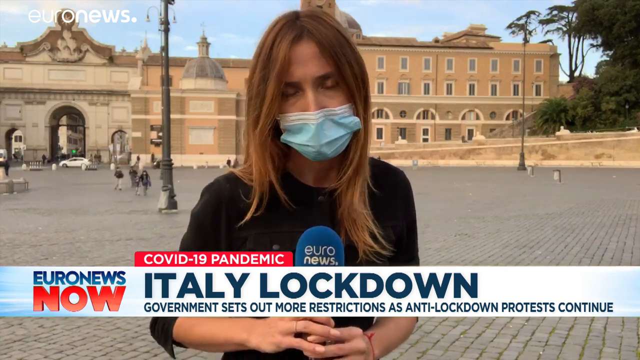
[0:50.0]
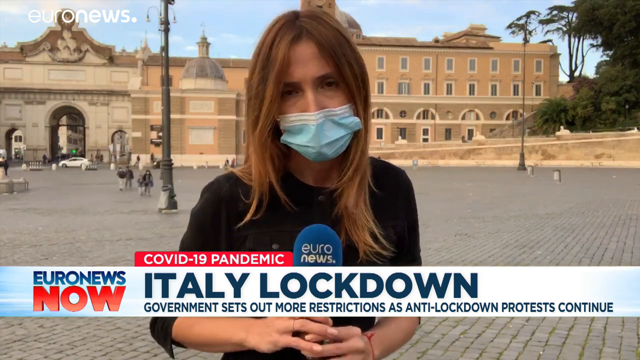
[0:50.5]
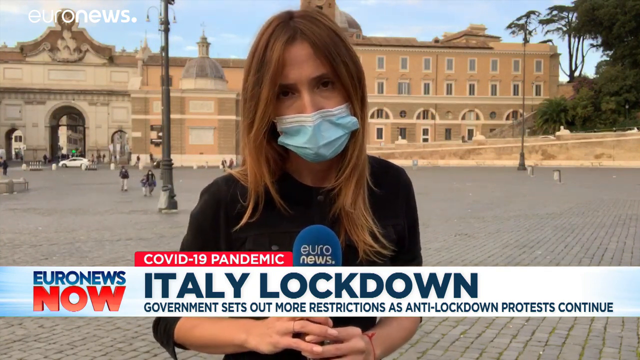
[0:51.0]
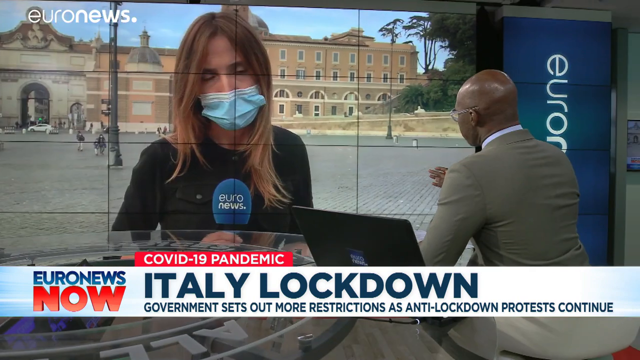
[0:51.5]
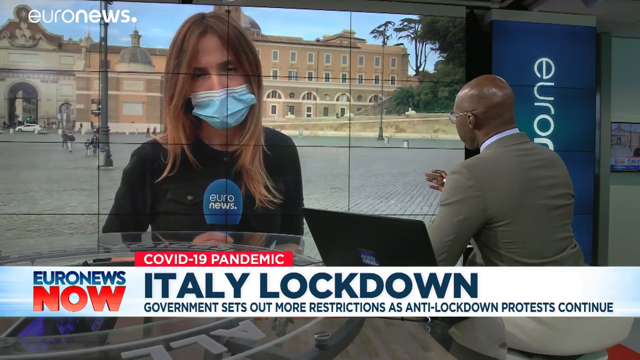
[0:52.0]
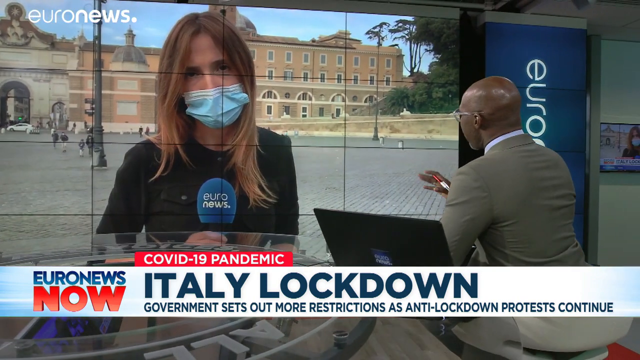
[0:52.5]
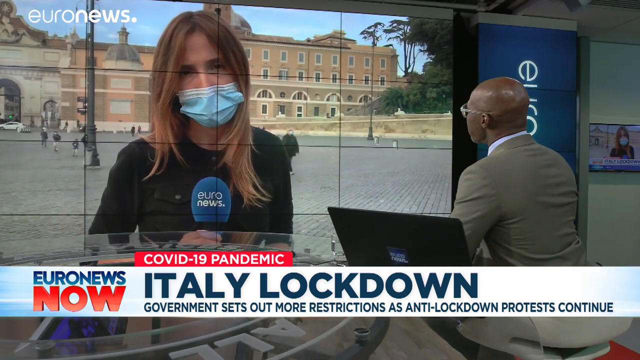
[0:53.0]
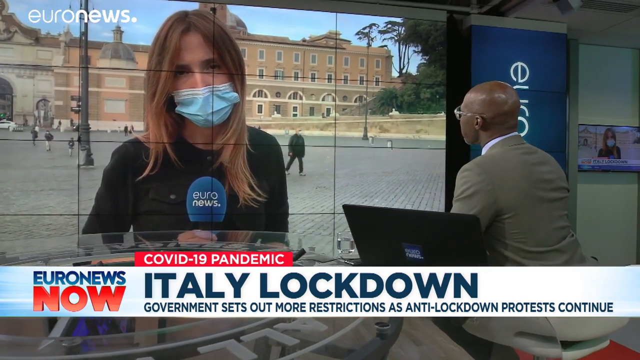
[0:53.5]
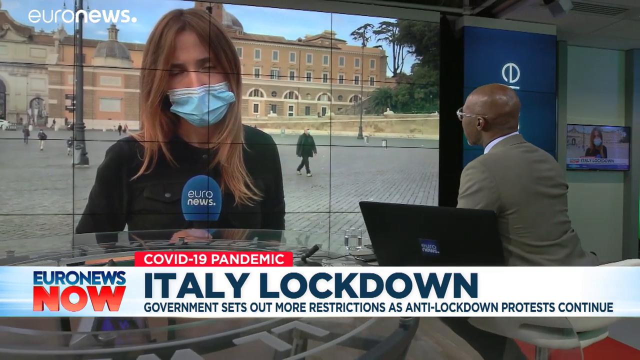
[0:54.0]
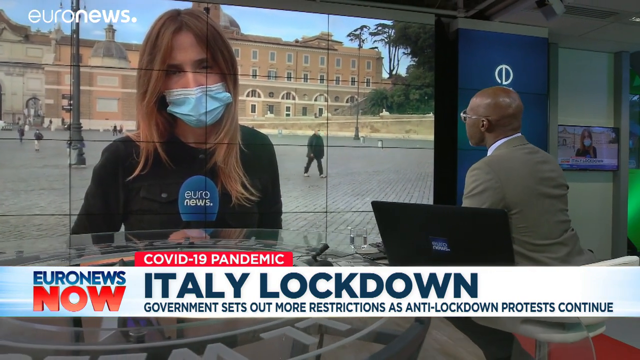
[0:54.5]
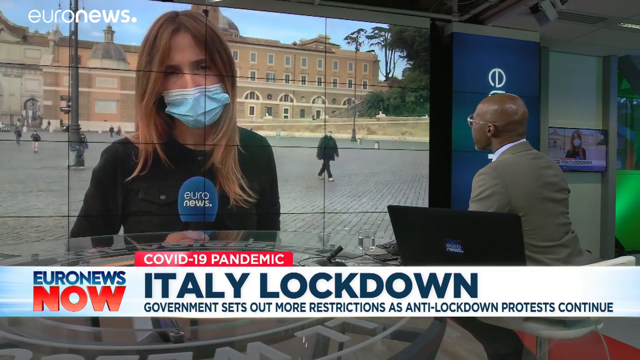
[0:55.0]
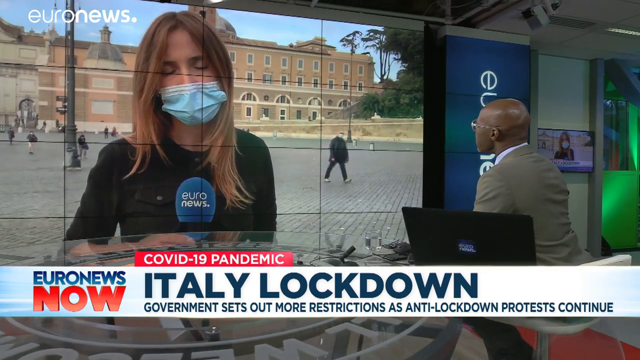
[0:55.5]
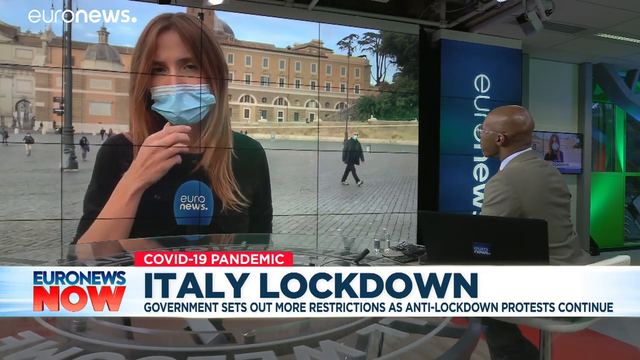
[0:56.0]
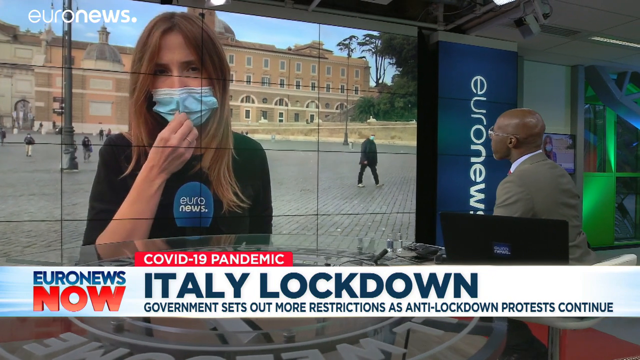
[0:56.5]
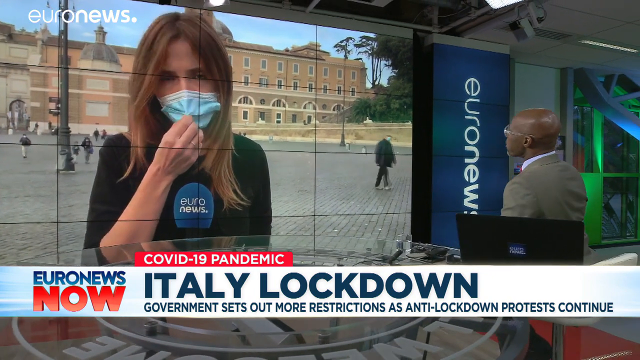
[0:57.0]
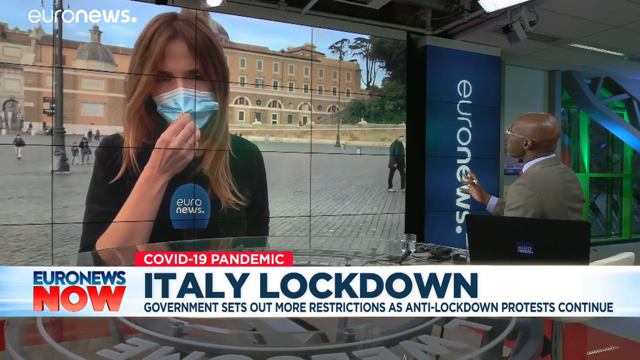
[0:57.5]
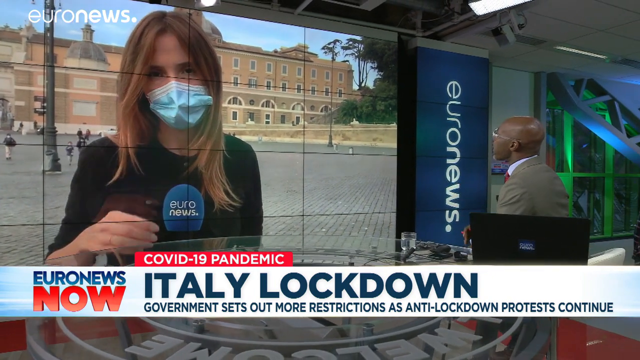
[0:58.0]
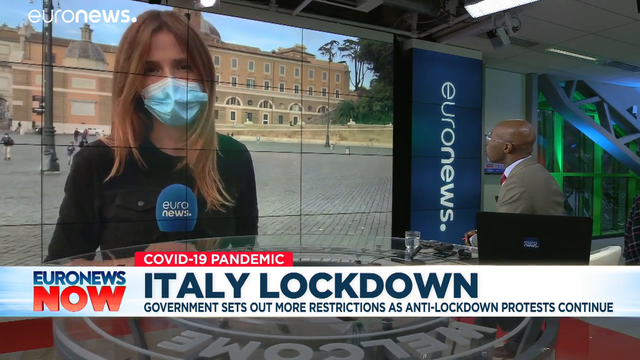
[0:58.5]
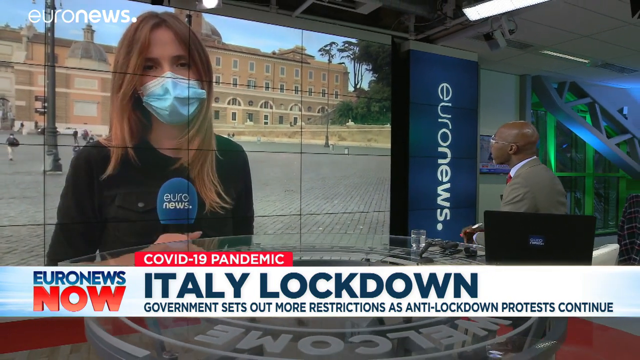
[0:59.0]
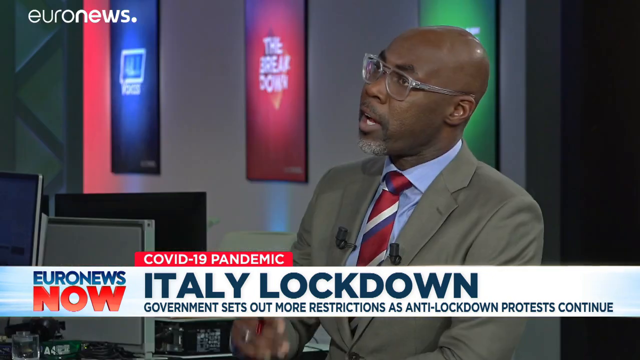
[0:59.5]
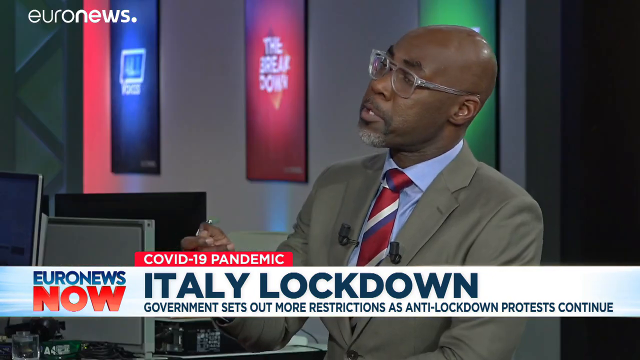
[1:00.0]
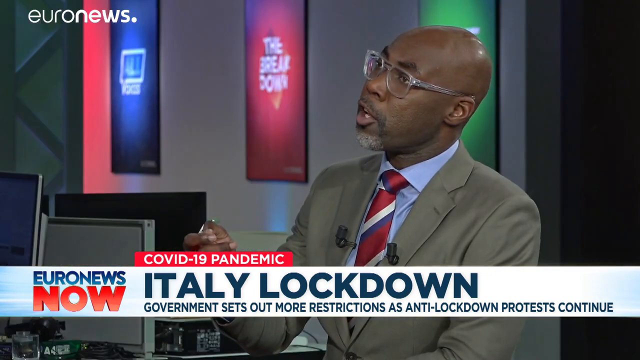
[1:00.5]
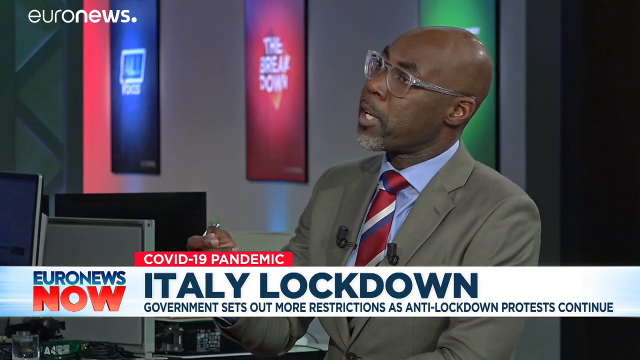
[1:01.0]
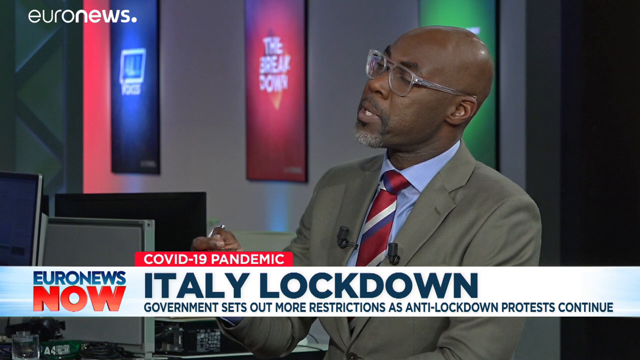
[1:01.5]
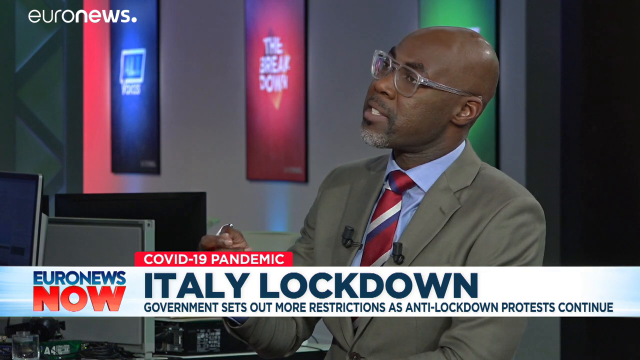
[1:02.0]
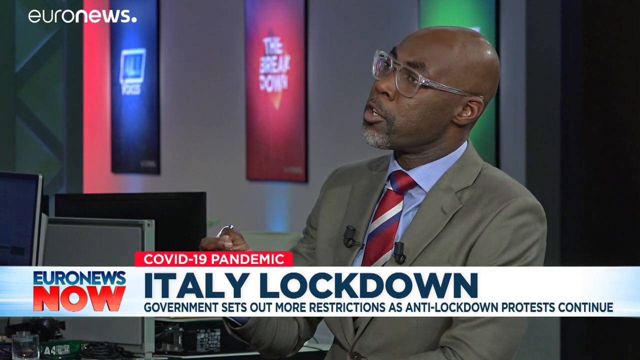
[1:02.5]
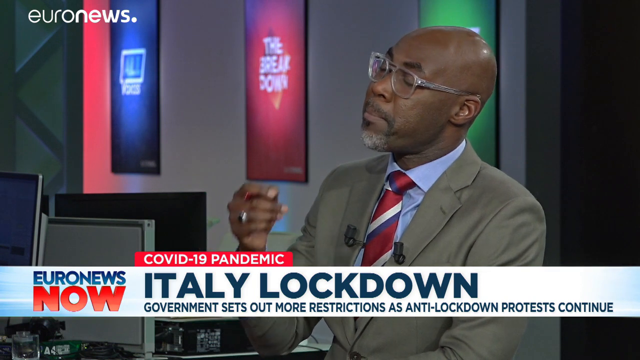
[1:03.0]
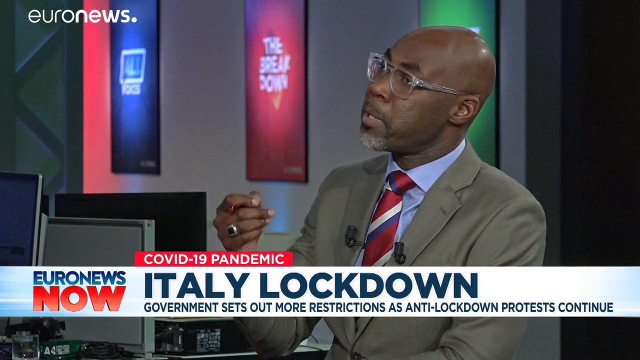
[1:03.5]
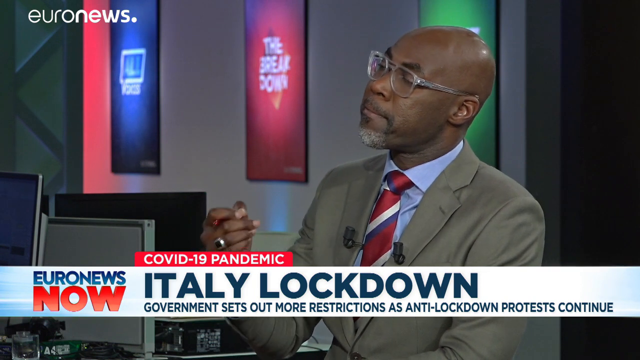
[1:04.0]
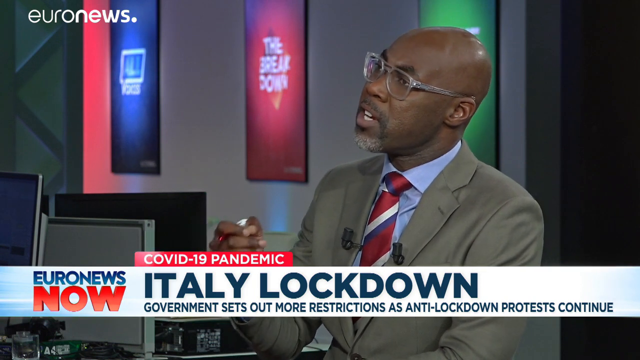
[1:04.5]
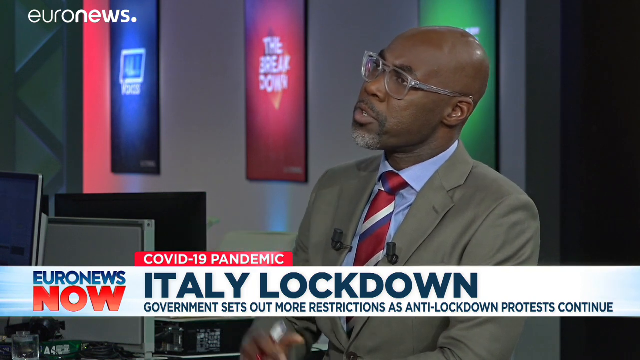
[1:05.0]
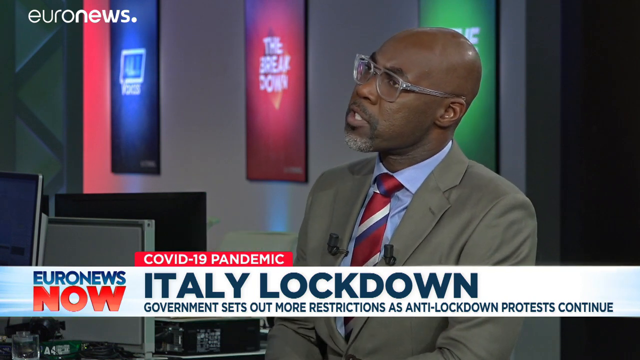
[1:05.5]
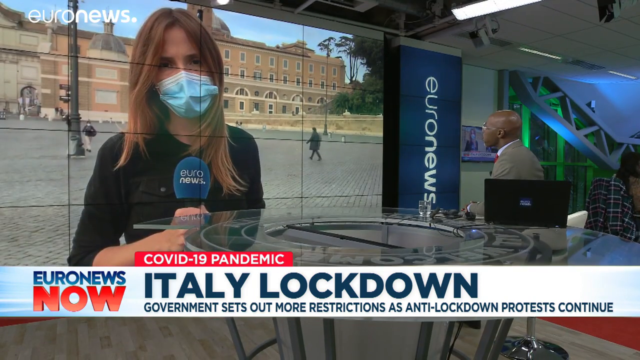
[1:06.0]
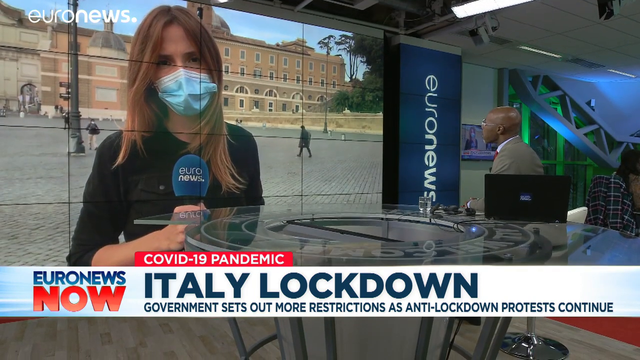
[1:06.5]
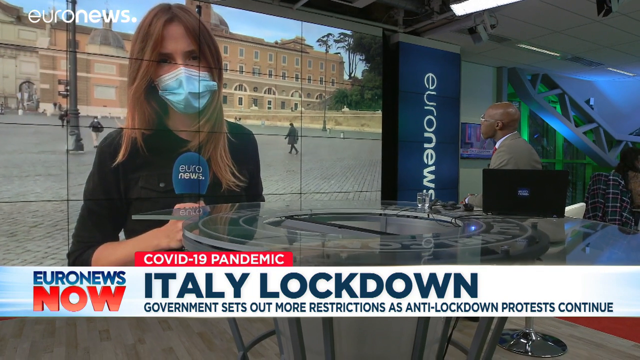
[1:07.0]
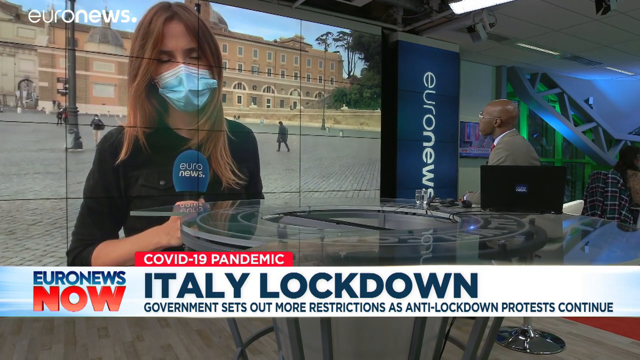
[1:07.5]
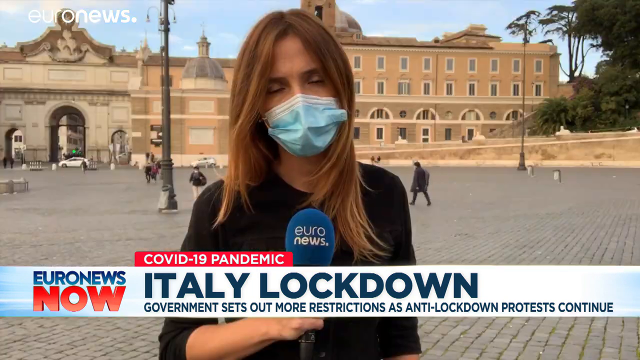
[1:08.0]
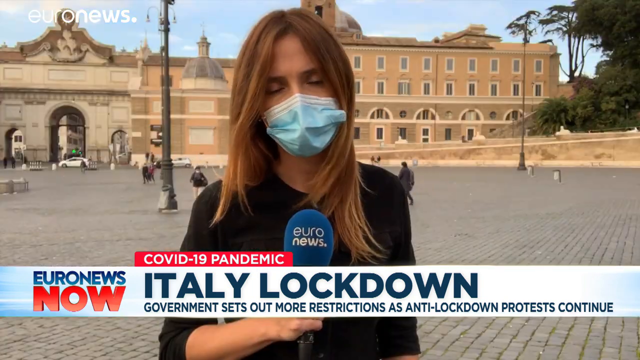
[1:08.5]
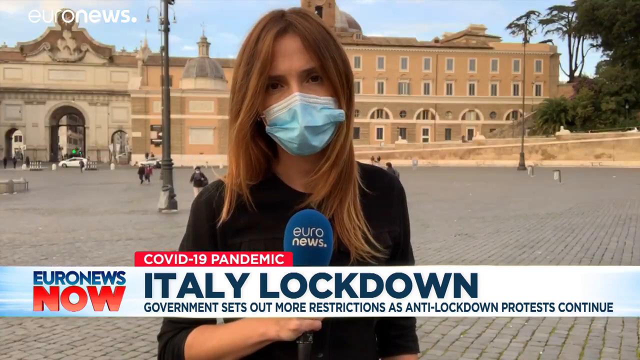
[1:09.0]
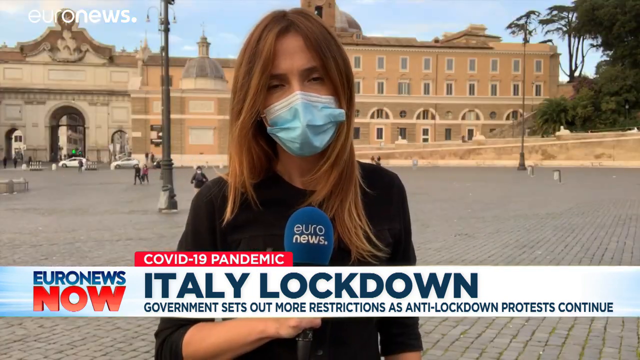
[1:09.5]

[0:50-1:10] A woman with long blonde, brownish hair extending past her shoulders wears a blue and white mask, like a COVID mask, and a long black dressy shirt, and holds a blue microphone with white text that says "Euronews". White text in the top left corner also says "Euronews". At the bottom is a white and blue banner with text on the left and right: "Euronews now" in blue and orange, and blue text that says "Italy lockdown government sets out more restrictions as anti-lockdown protests continue." Above it is an orange banner with white text that says "COVID-19 pandemic". The background looks like Rome, with a bunch of people walking around, some light posts, and trees in the upper right corner. The woman then appears on a screen that a man is looking at; he has a black computer at his side, wears glasses, and talks to her through the screen. The woman adjusts her mask, and the focus shifts to the man in clear glasses, who wears a tan suit with a blue collar and a red, white and blue striped tie. He talks while moving his hand. The view then returns to the screen showing the woman, and then to her in her original setting.